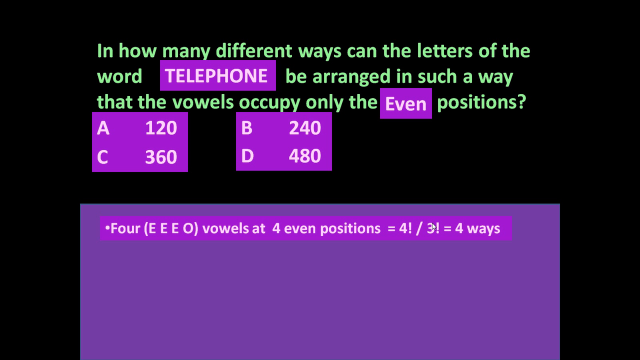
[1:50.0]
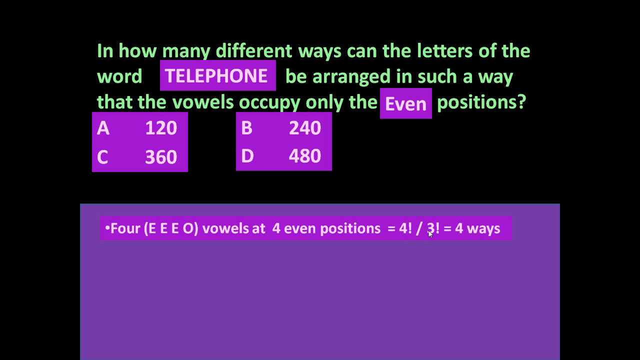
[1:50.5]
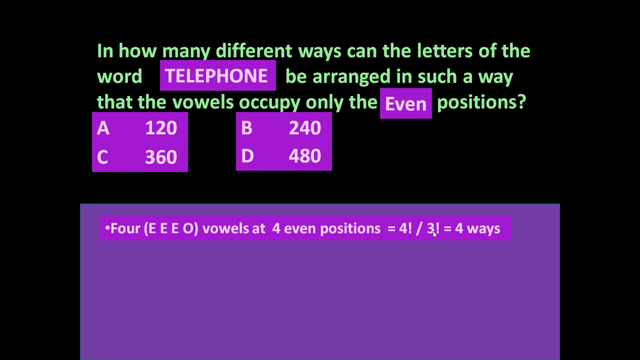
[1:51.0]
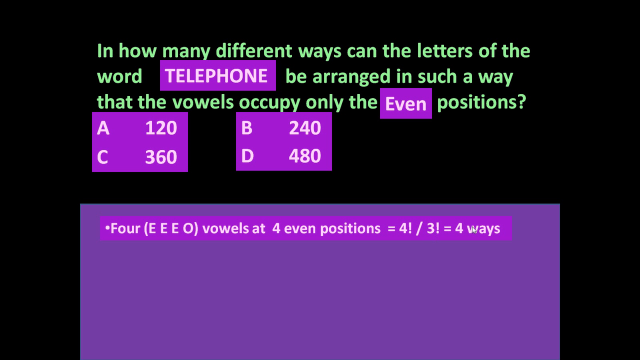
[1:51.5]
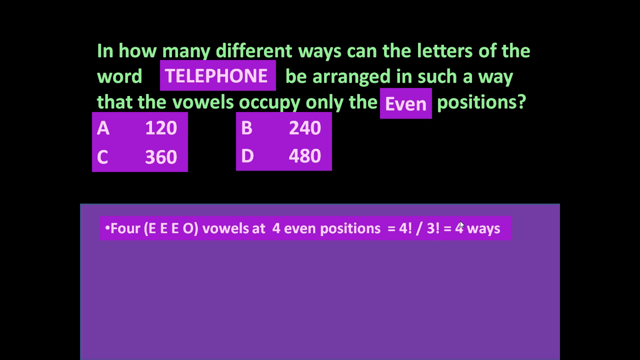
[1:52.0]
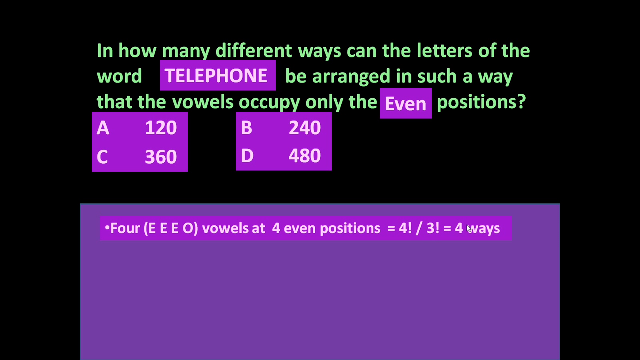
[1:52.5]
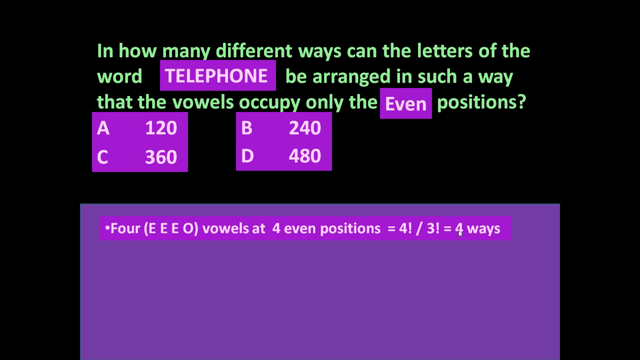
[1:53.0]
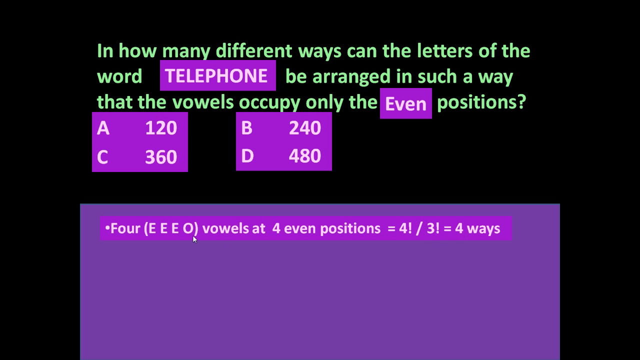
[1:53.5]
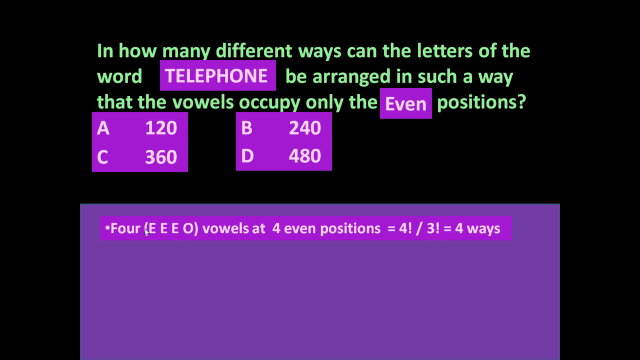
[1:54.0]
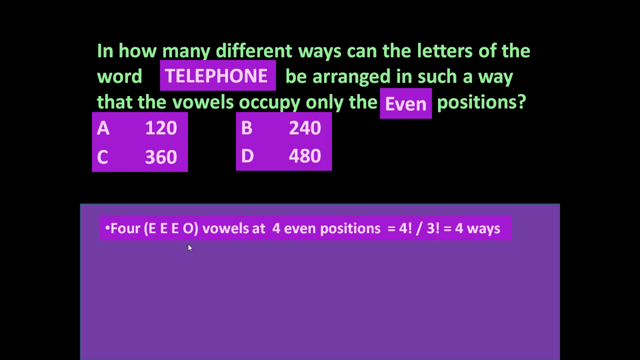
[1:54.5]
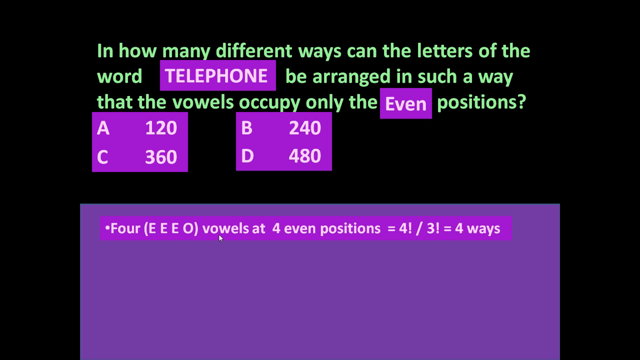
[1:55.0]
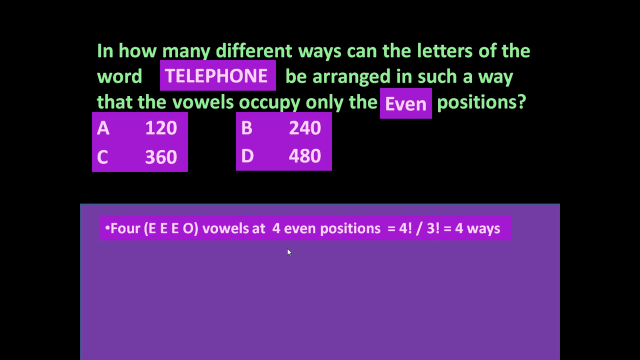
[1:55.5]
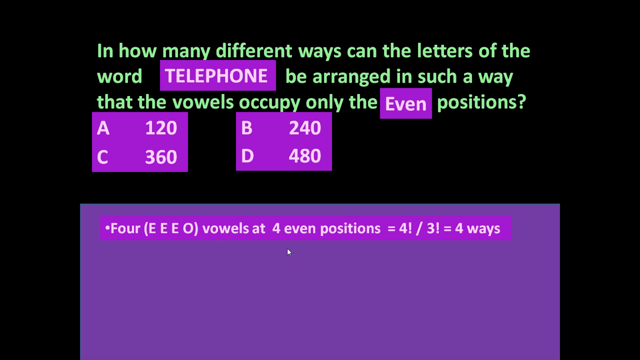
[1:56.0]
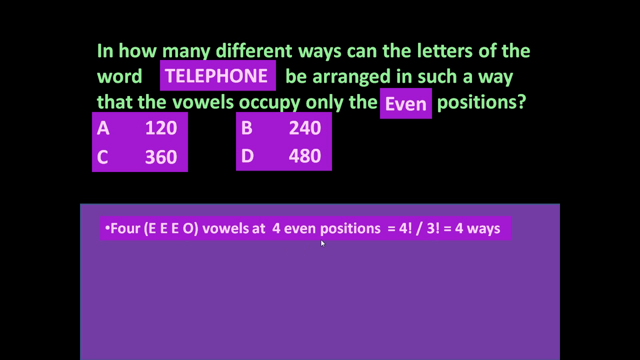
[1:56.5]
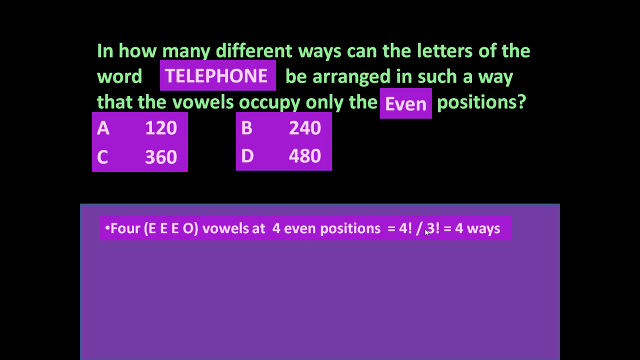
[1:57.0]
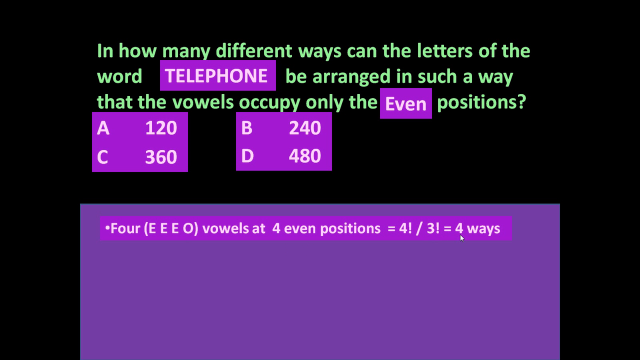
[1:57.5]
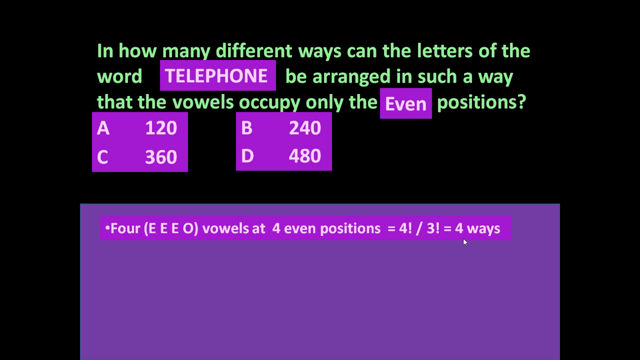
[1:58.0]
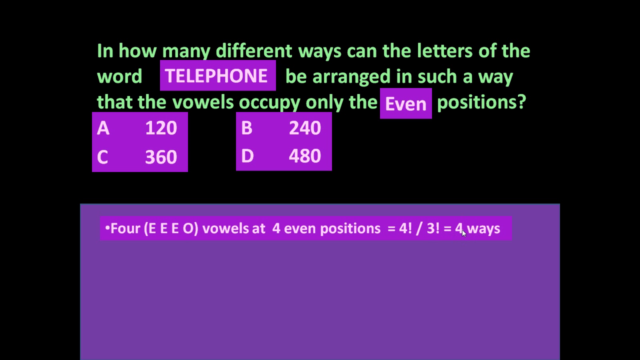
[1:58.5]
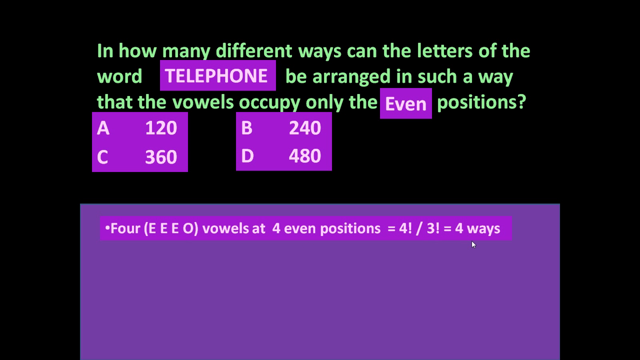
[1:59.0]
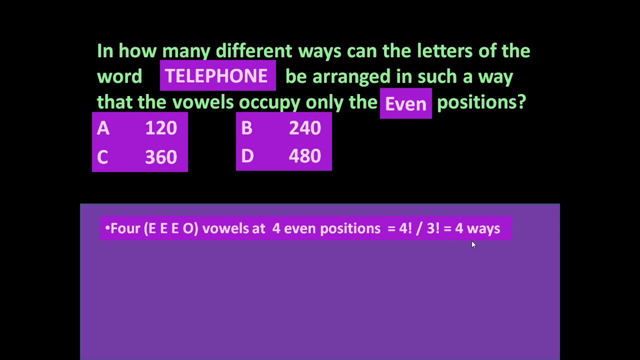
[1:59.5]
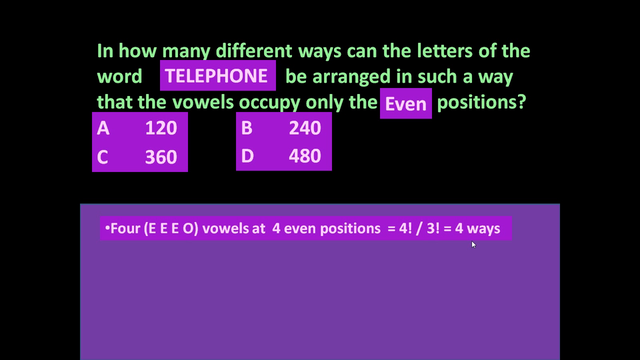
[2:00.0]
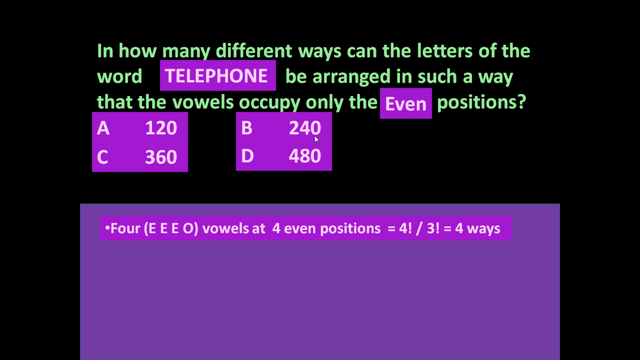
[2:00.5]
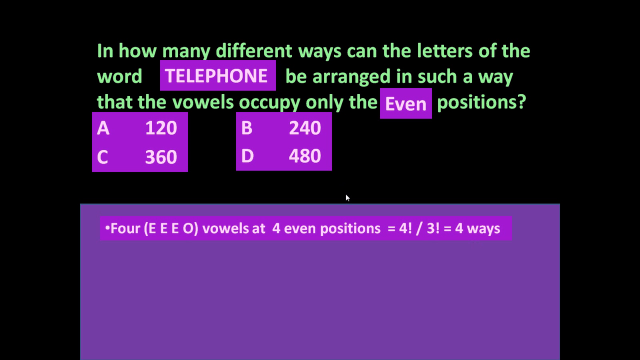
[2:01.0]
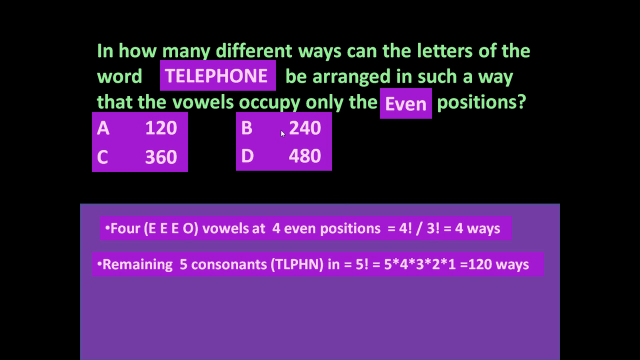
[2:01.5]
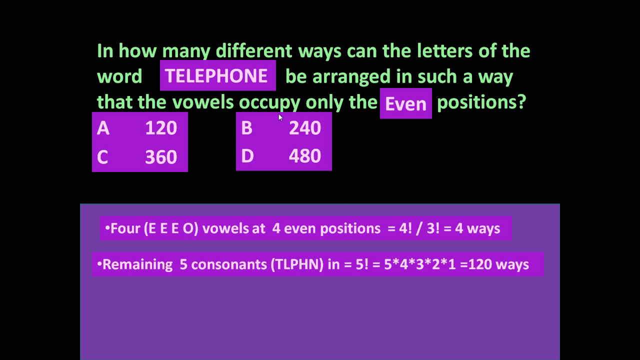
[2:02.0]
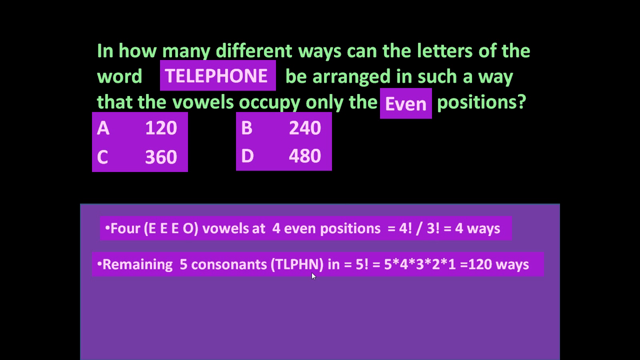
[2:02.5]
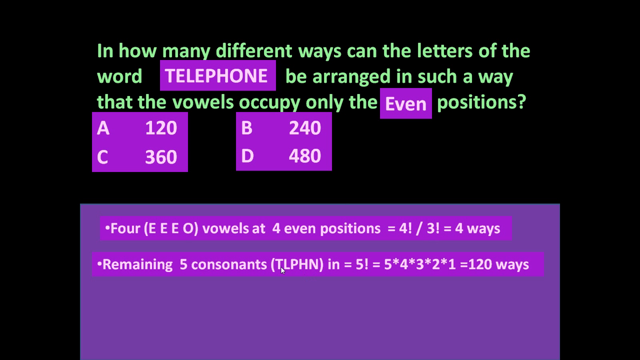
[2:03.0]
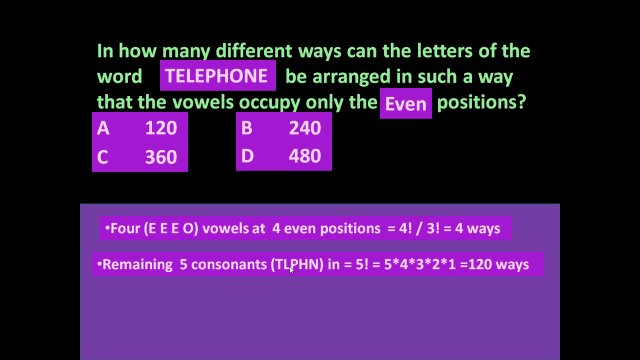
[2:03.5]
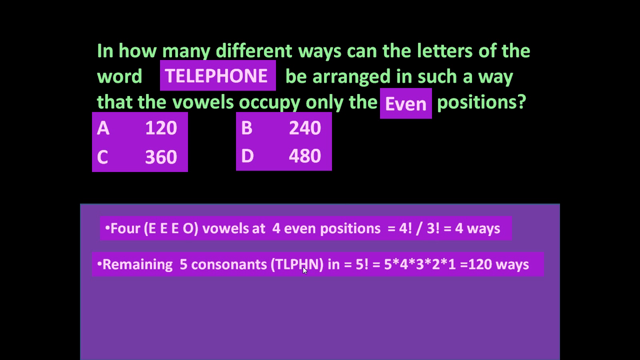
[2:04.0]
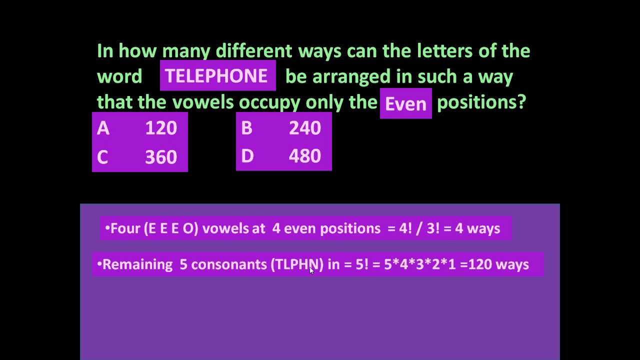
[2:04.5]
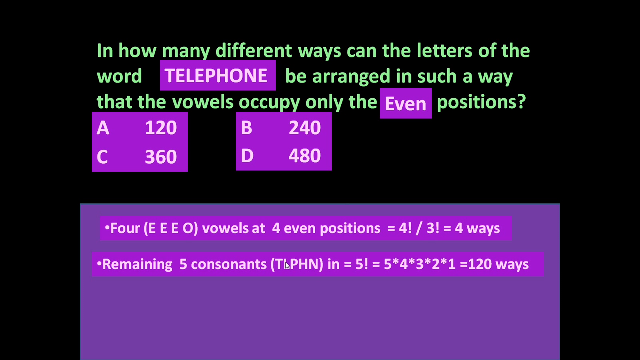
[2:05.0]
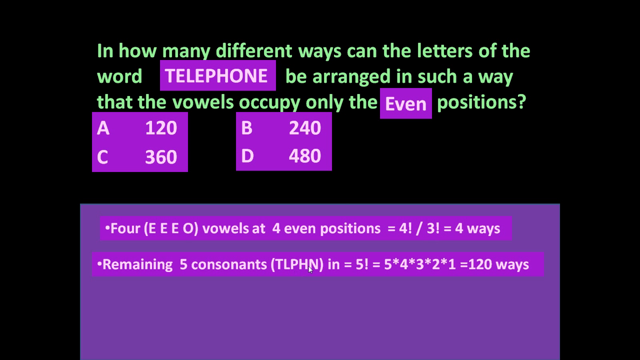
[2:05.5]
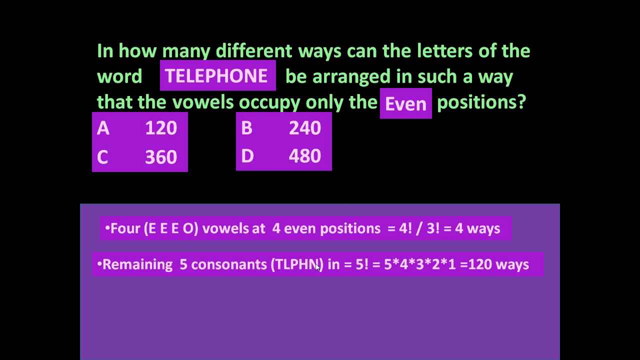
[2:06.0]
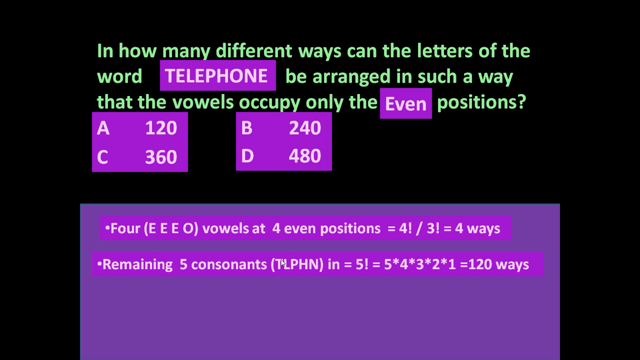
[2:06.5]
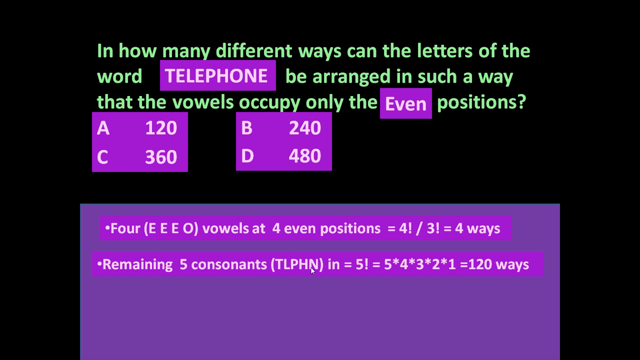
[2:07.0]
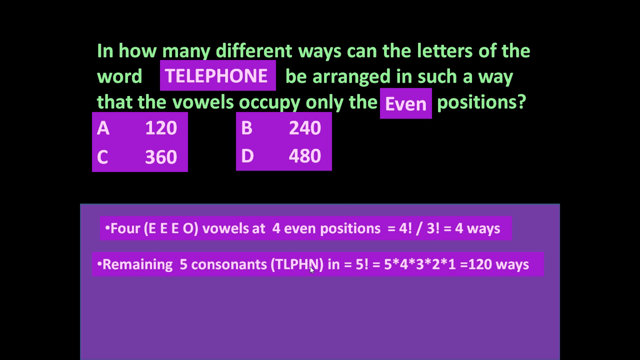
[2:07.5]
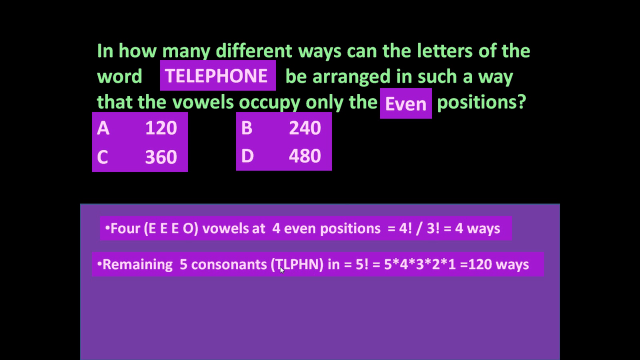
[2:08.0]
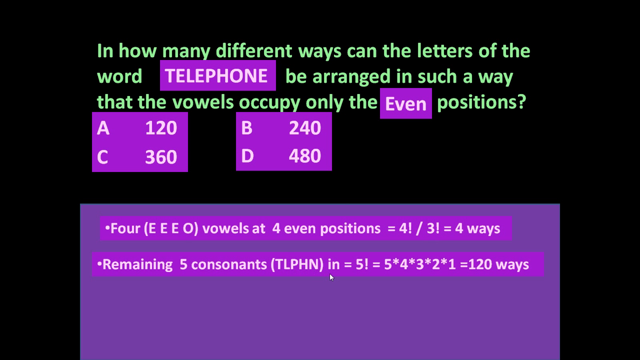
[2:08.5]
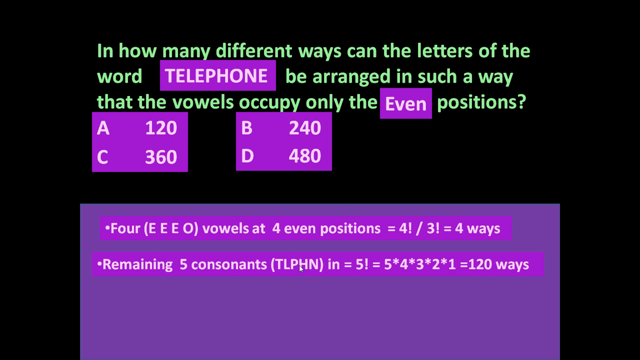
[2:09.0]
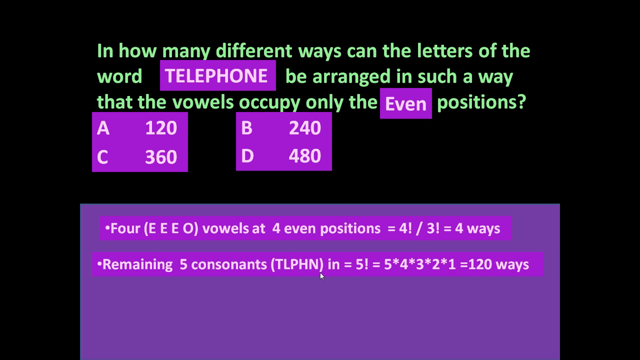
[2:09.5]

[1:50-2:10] On a black background, green script reads "in how many different ways can the letters of the word telephone be arranged in such a way that the vowels occupy only the even positions." The word TELEPHONE is in all caps and highlighted with a rectangular purple box in white print, and the capitalized word Even is in a purple rectangular text box, also in white print. Below are two purple rectangles with white print: the left one says "A120" with "C360" below, and the right one says "B240" with "D480" below. In a pale purple text box at the bottom, the first line, in a darker purple text box with white print, reads "Four (E E E O) vowels at four even positions equal four!/ three! equals four ways." The cursor moves around, and a second bullet point pops up in the purple box: "remaining five consonants (T L P H N N) equal five exclamation point equals five times four times three times two times one equals 120 ways."